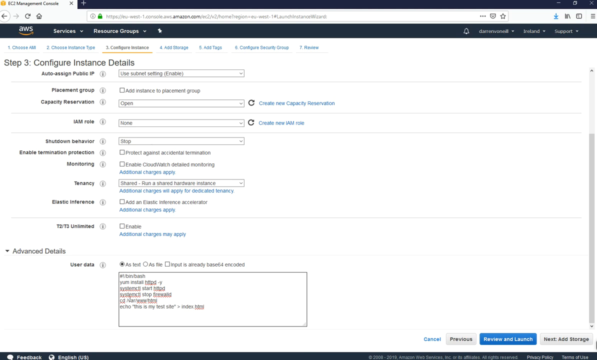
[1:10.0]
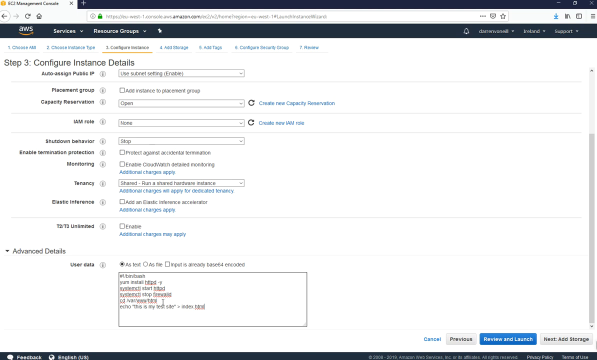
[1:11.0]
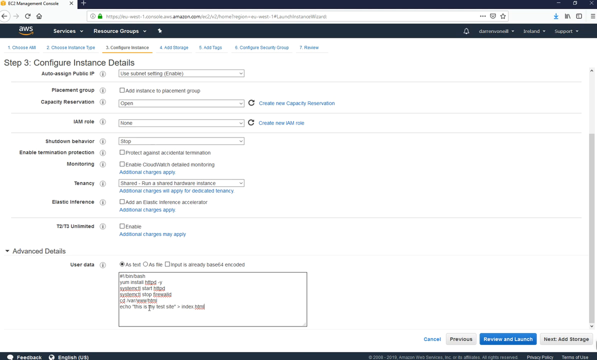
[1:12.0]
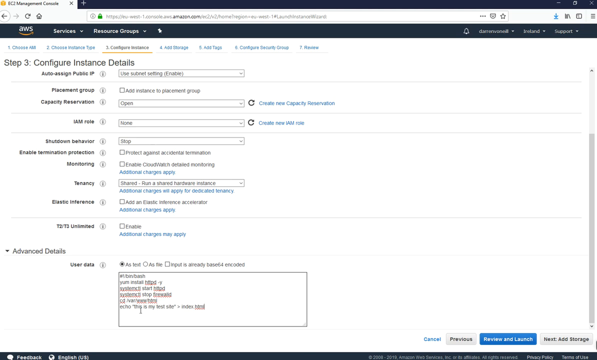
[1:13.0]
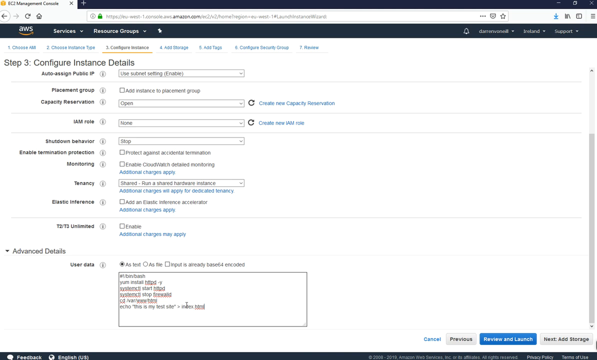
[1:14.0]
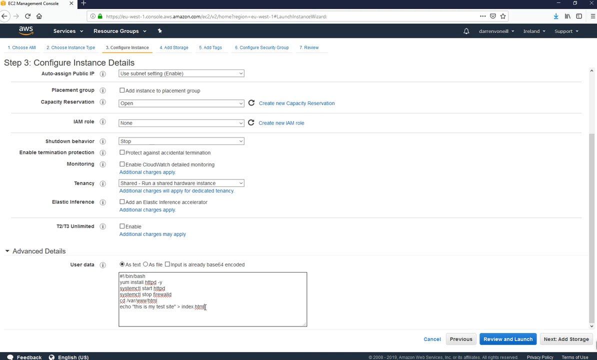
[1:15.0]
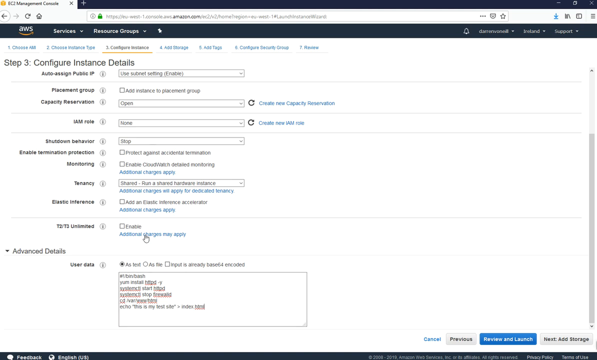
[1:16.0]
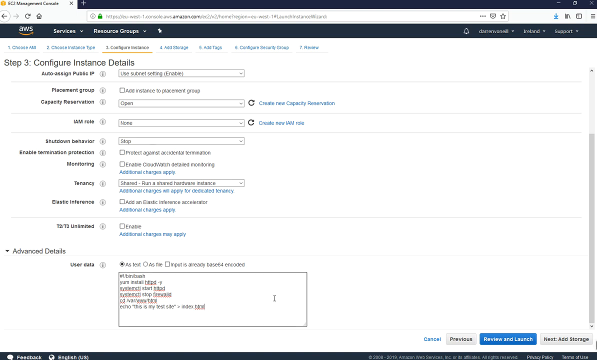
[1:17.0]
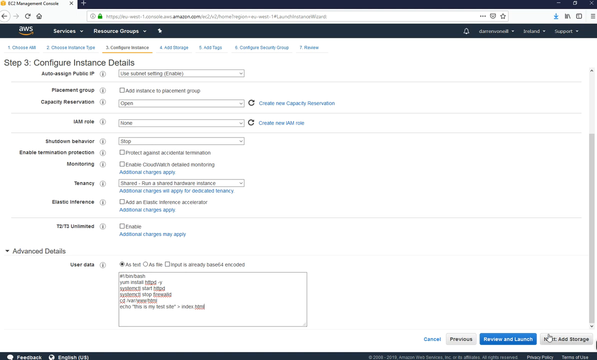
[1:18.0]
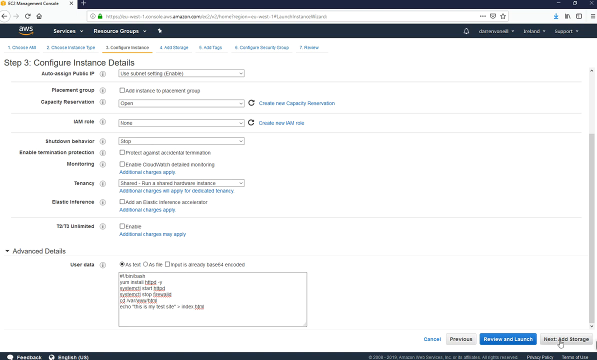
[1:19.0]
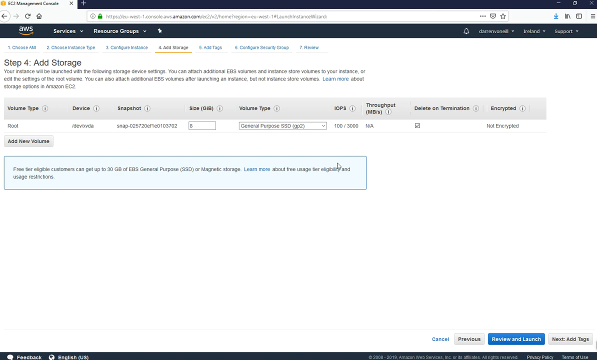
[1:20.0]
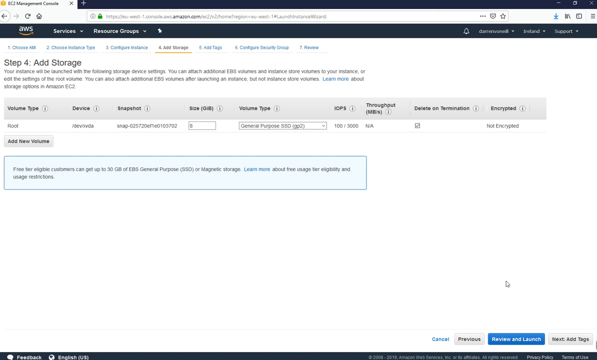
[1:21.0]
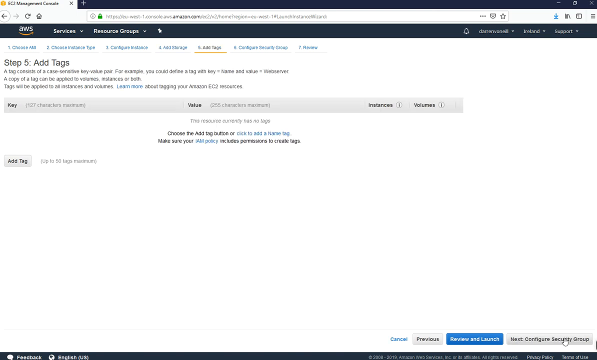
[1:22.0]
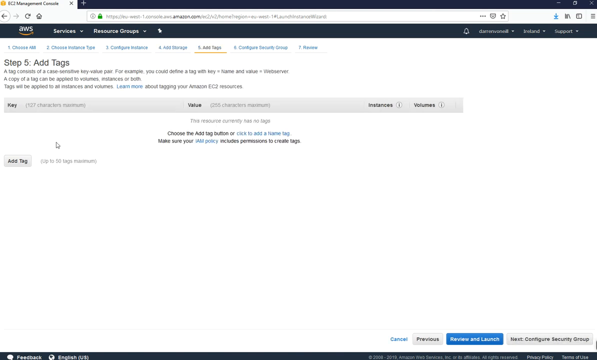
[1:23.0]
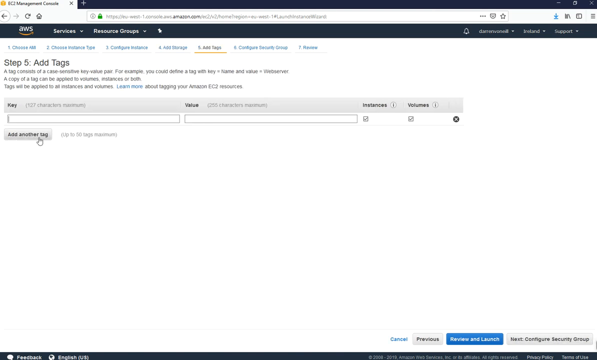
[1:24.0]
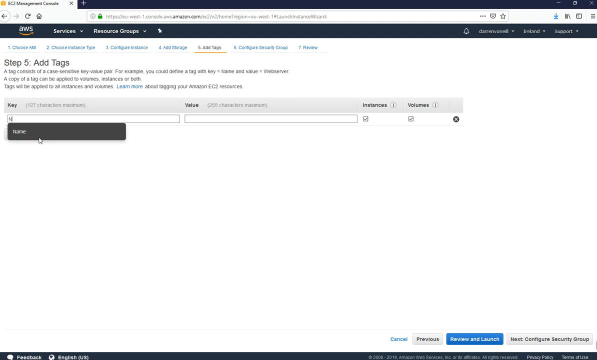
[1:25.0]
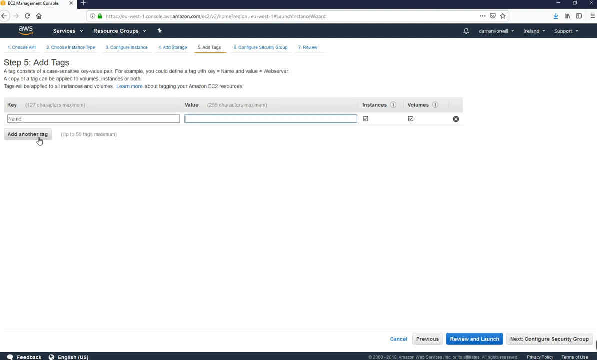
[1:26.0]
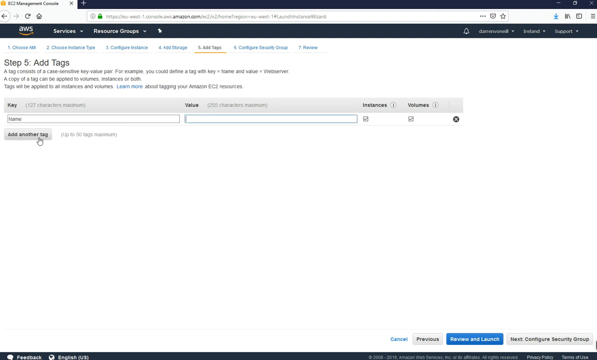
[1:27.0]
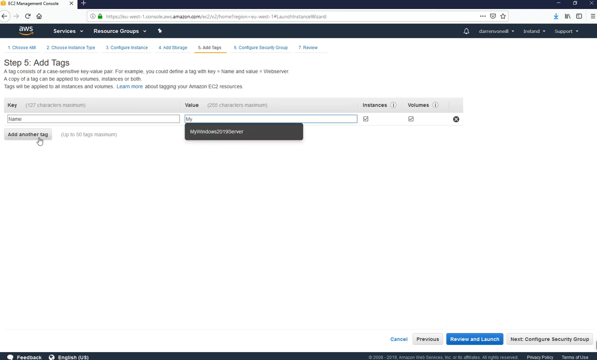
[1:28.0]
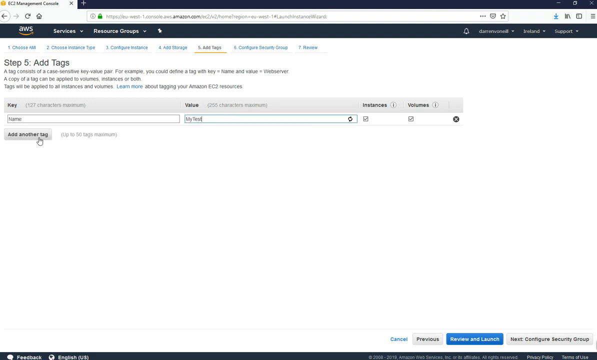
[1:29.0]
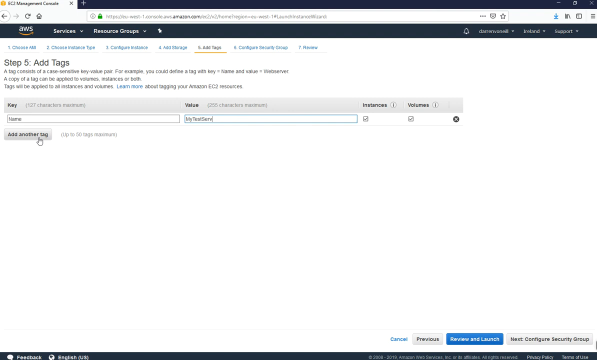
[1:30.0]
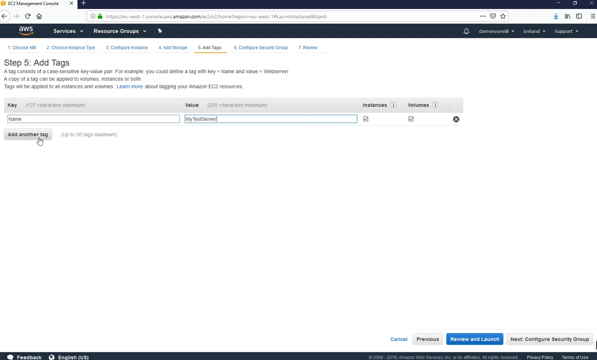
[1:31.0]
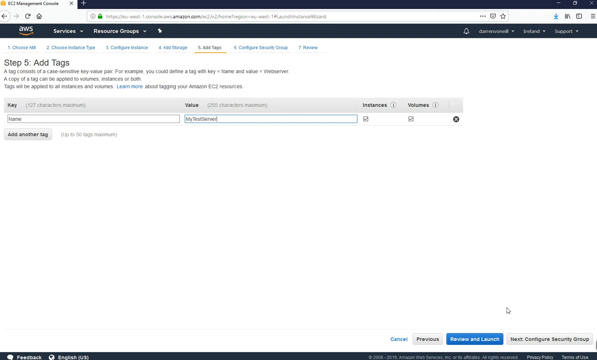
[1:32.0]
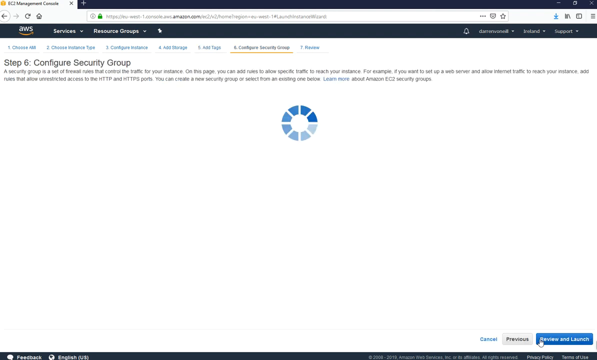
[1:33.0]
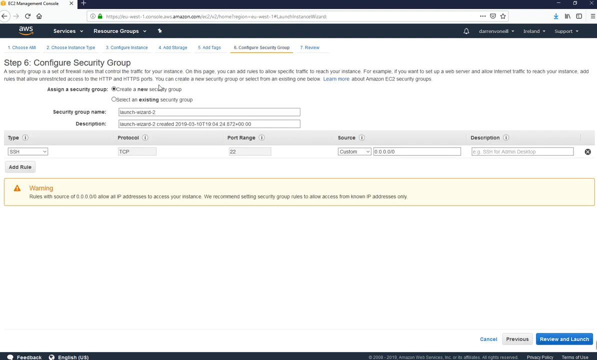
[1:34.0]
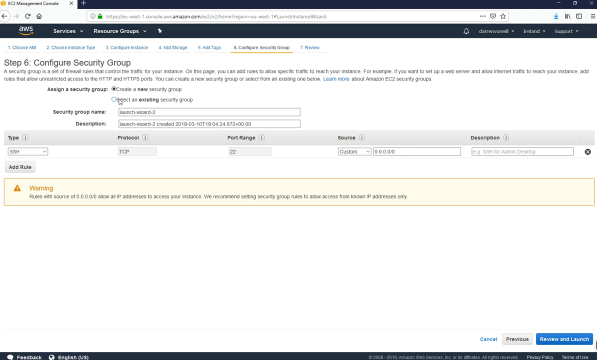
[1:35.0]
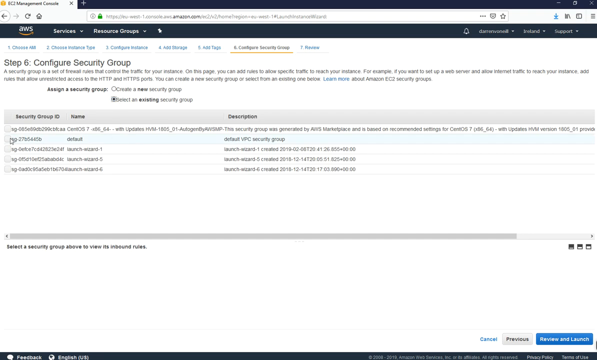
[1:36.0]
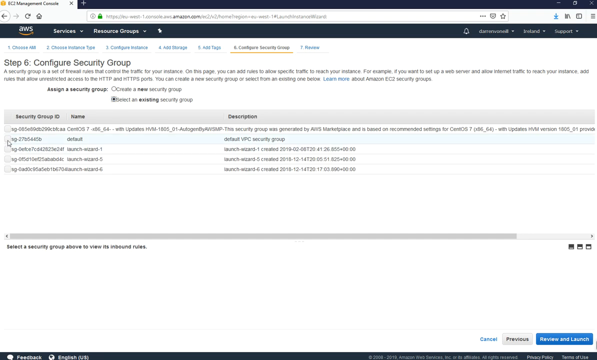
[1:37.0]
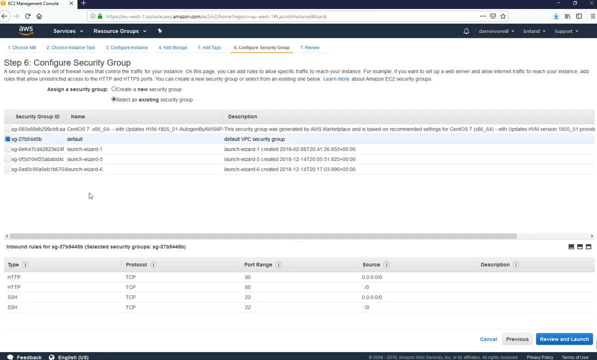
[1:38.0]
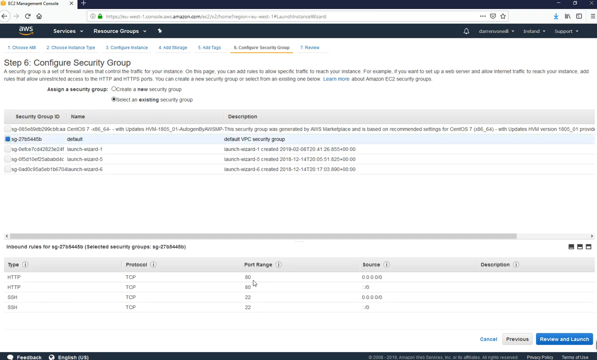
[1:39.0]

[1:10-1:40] A computer monitor shows a web page for AWS with seven tabs. The page is on step three, Configure Instance Details. A cursor moves across the page to Advanced Details, which has a drop-down arrow, and then to a box for User Data containing text, some of it underlined in red. The cursor moves all the way to the bottom right to a button for Next, Add Storage, and clicks it. Step four shows a toolbar, entries, and boxes. The cursor moves to the bottom right and clicks to step five, add tags, where it clicks Add Tag, then Add Another Tag. There are entry boxes, one for key and one for value, and text is entered into the value box. Next, Configure Security Group is clicked. Five entries appear below a toolbar, each highlighting as the cursor moves over it, and the box for the second entry from the top is clicked.